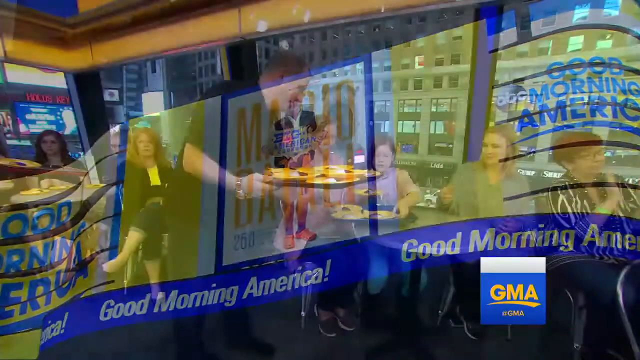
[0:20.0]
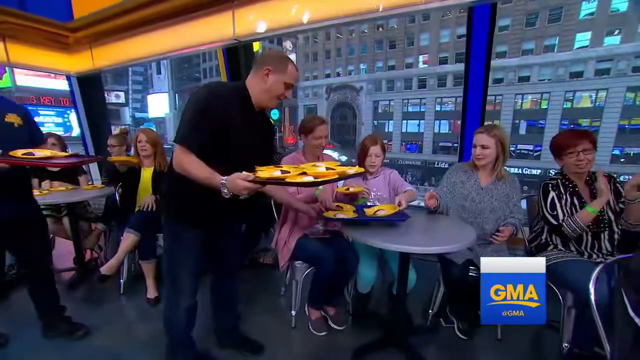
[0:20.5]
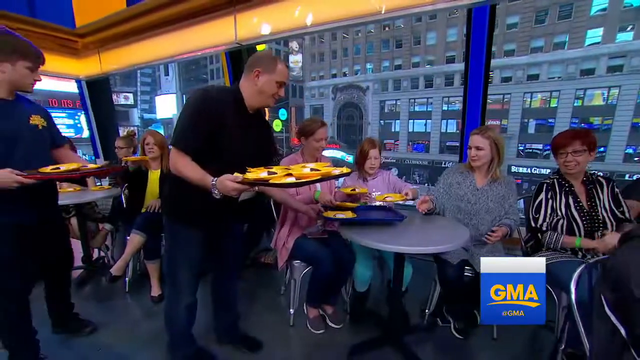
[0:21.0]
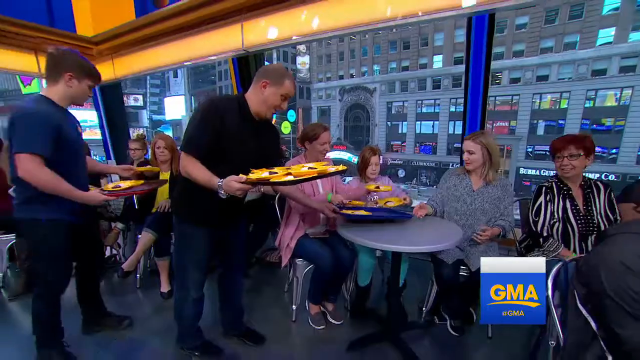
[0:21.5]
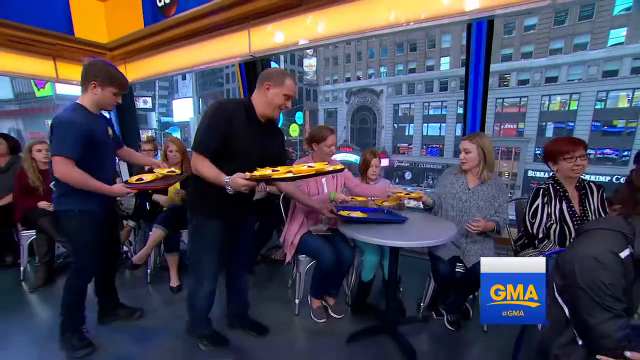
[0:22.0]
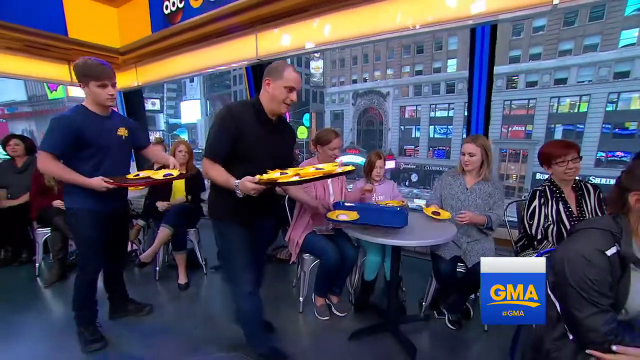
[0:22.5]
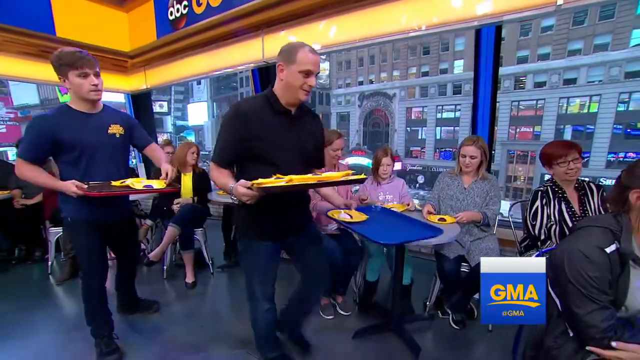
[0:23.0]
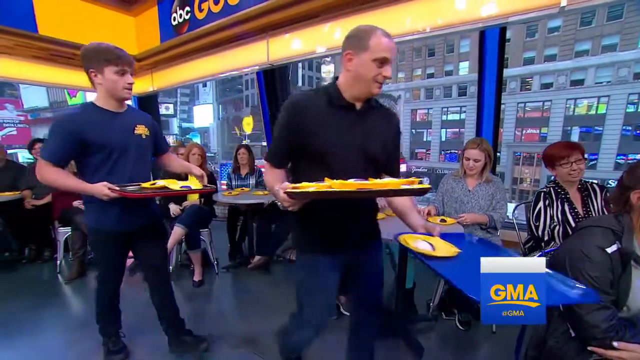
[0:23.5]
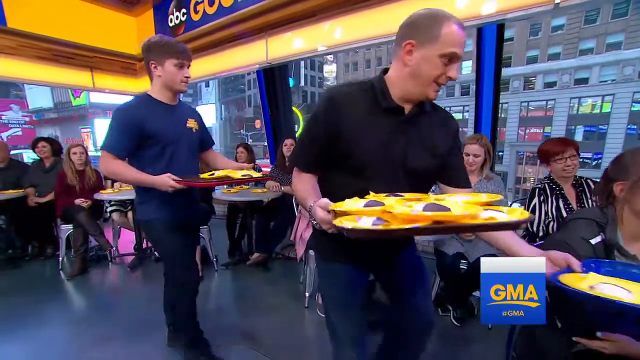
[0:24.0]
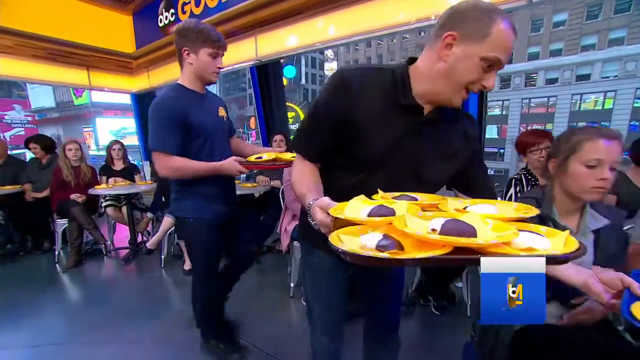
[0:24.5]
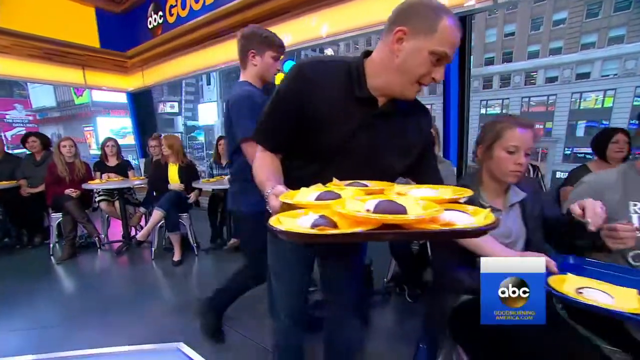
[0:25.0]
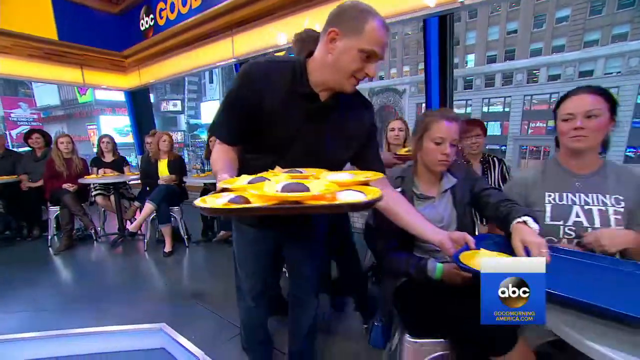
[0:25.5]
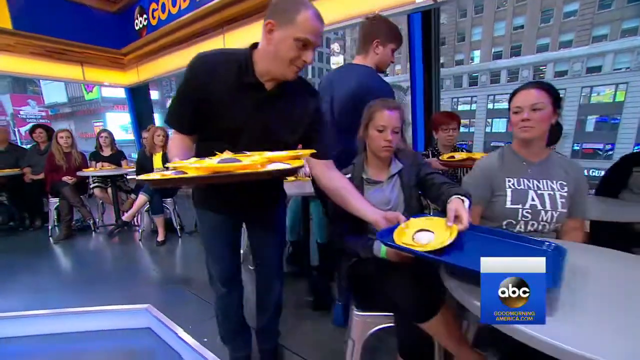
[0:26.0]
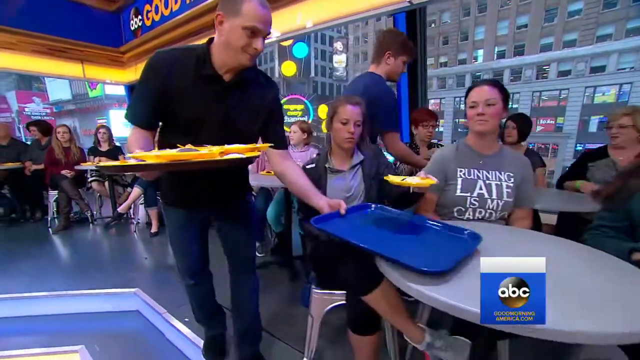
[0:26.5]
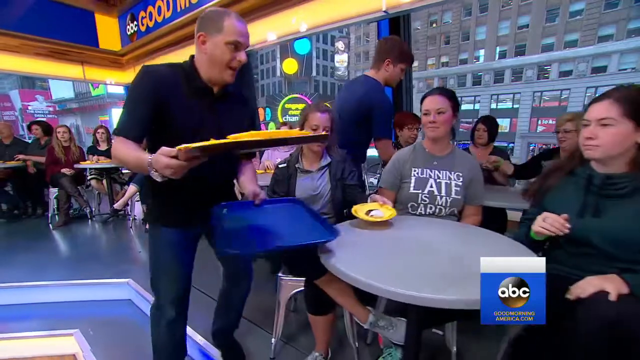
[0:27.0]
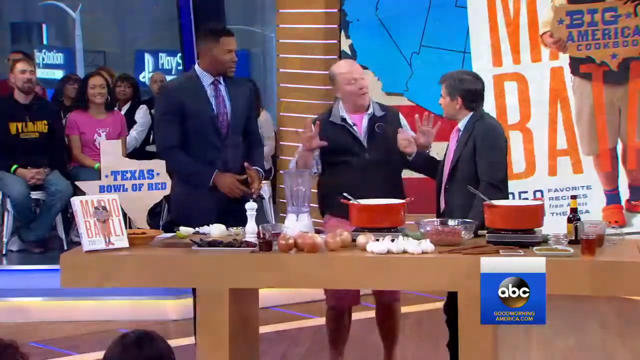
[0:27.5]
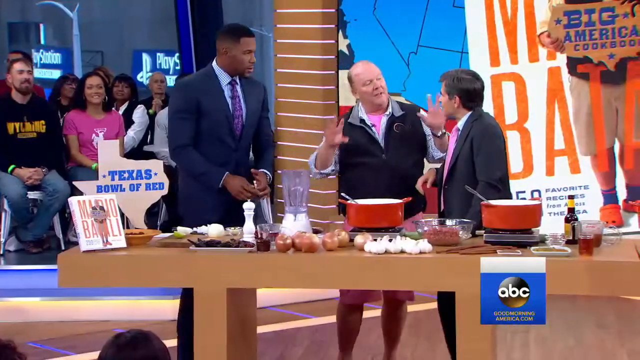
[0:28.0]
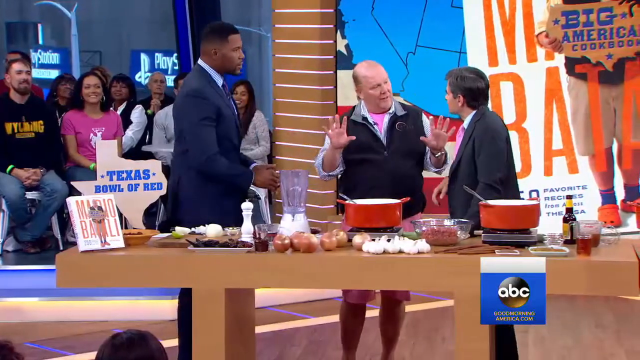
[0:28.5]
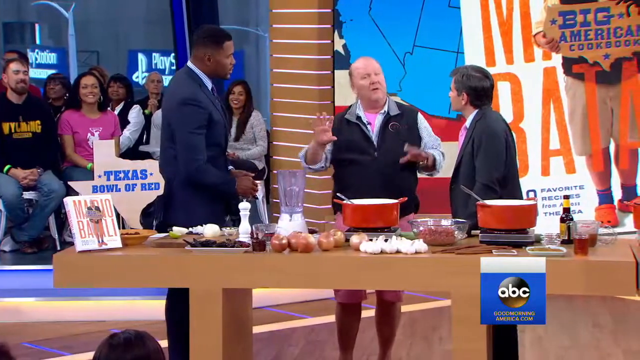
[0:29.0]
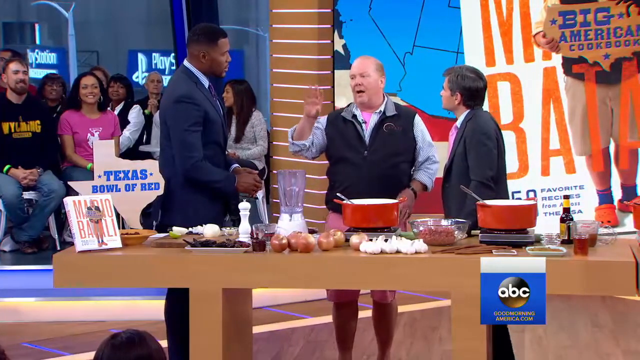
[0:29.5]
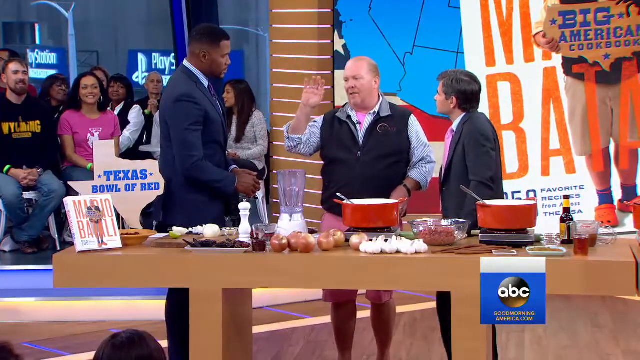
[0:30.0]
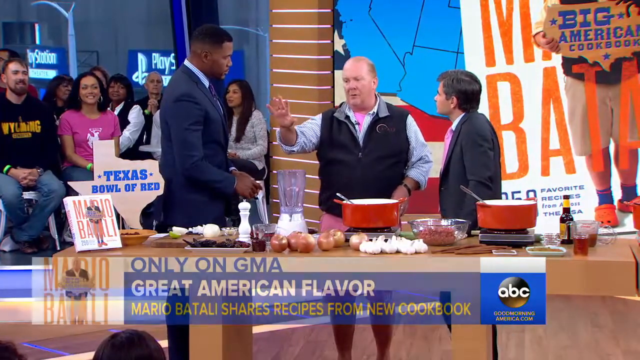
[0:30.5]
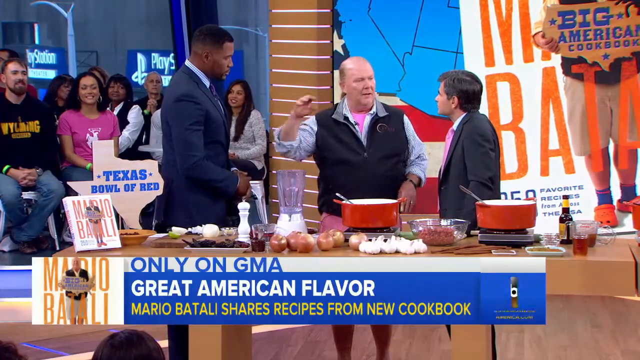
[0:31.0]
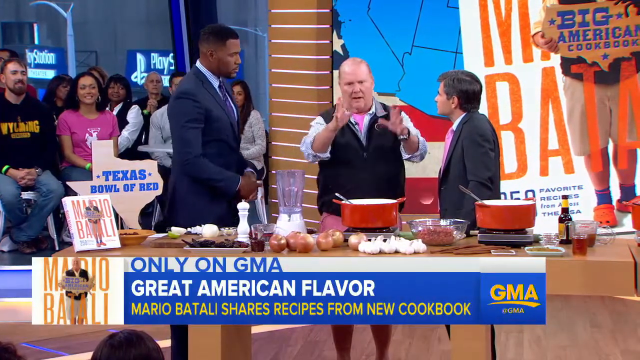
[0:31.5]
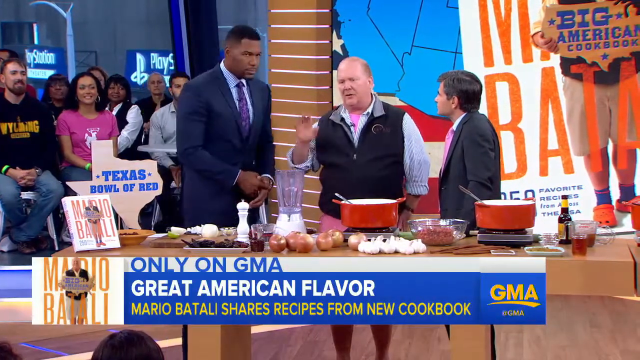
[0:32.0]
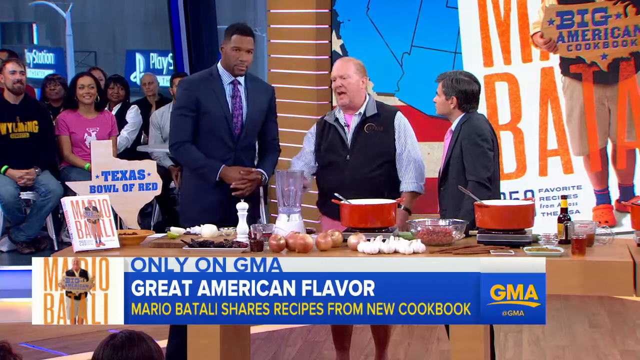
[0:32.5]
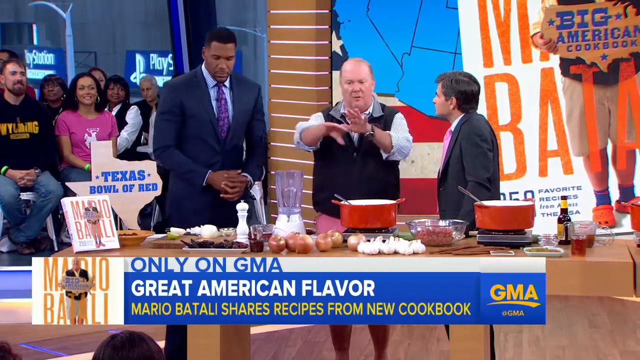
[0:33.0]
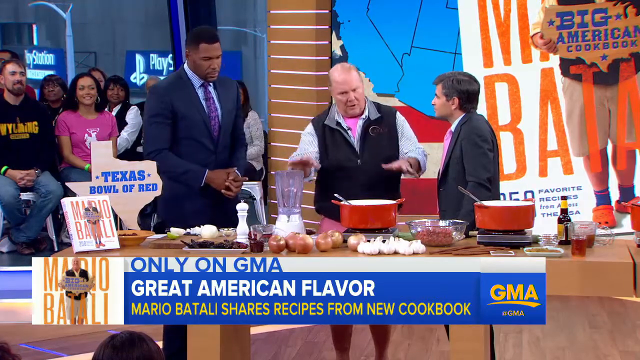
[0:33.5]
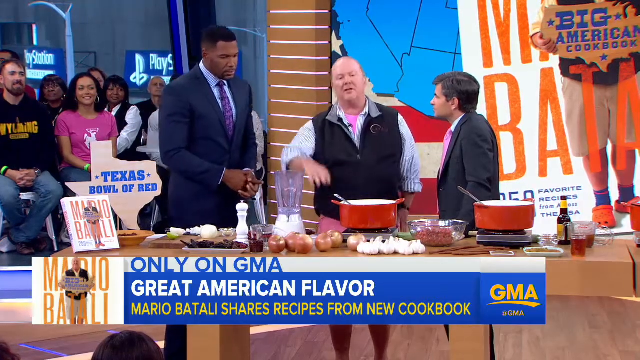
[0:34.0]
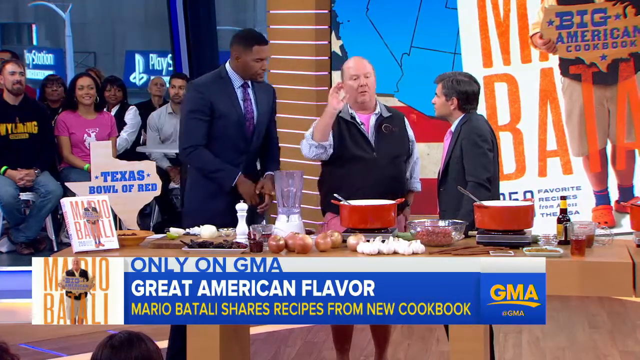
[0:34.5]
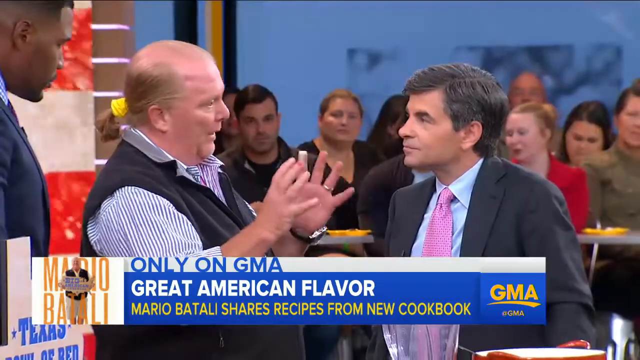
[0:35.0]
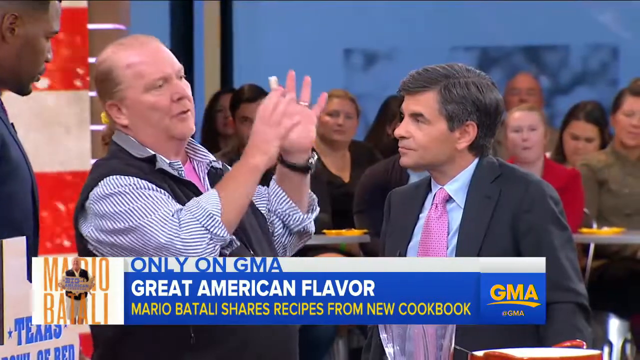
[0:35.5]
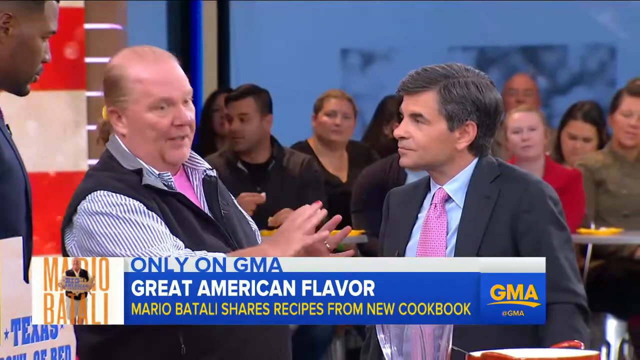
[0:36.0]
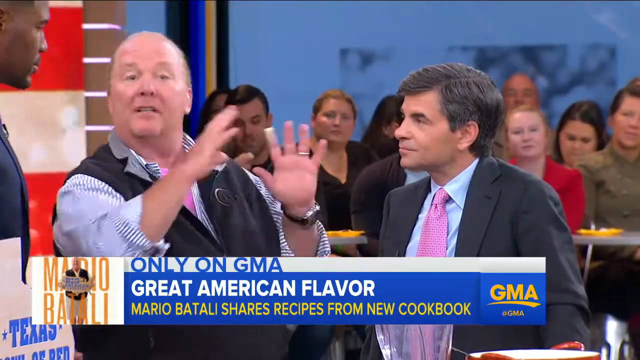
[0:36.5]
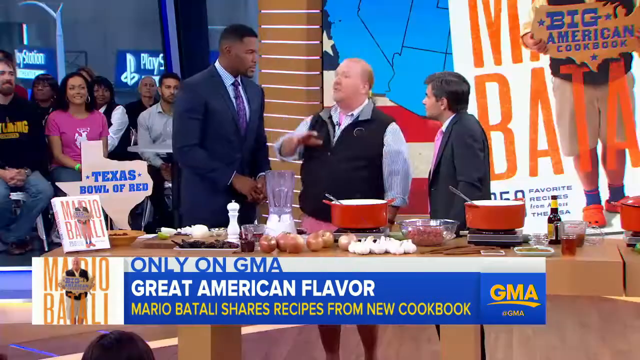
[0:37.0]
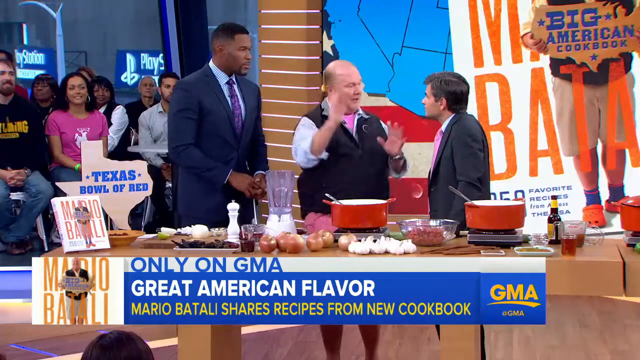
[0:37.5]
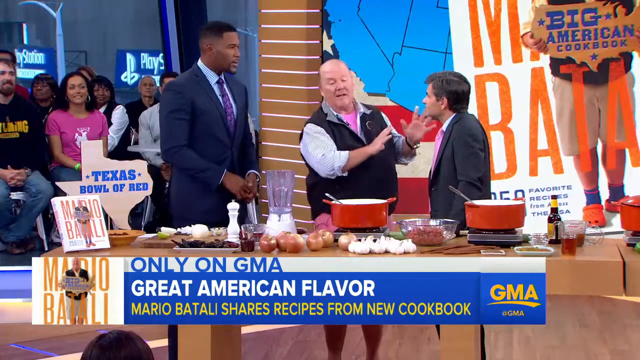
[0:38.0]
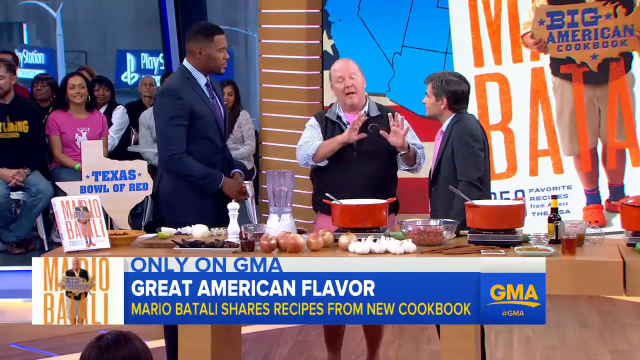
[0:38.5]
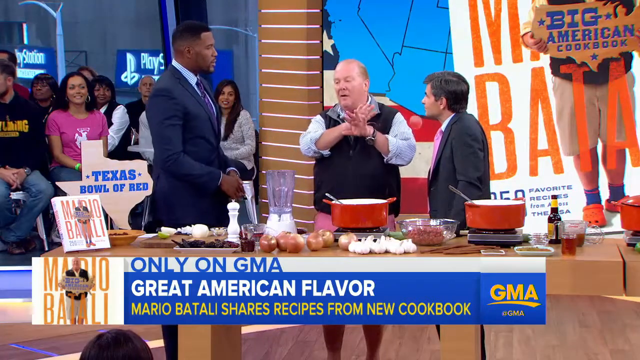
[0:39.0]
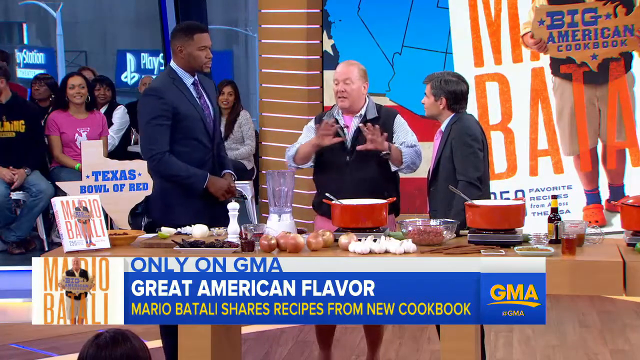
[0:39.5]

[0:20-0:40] The camera pans toward a person sitting next to a transparent glass wall, with buildings visible behind the glass. A man carries a big plate and tray of food on his right hand and serves it with his left to the tables of women in front of him. People at the table distribute the food with their arms. Another man behind him, wearing a collared shirt, serves food to the women behind him; he has a blue tray on his left hand and a tray of food on his right. At another table, a woman picks up a plate of food from the blue tray; her shirt says "running late is in my cards." The camera pans back to the men at the table with a lot of cooking equipment. The bald man in the center holds both hands up, showing ten fingers, then puts his left hand down, talks, and pushes his right hand forward.